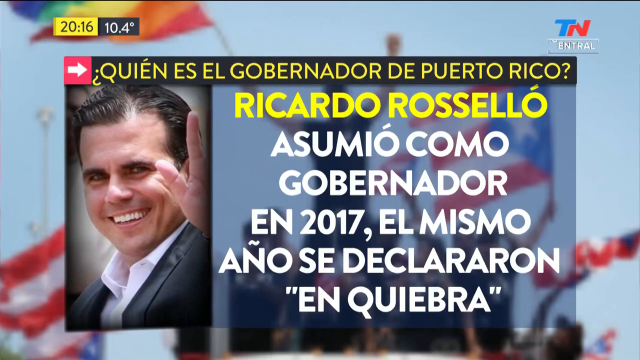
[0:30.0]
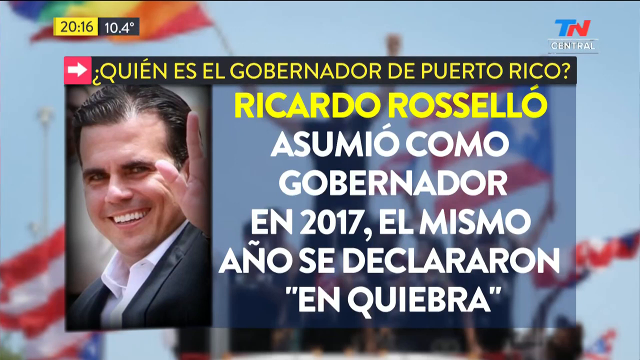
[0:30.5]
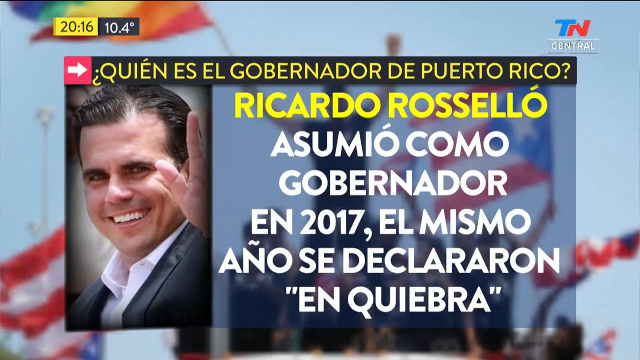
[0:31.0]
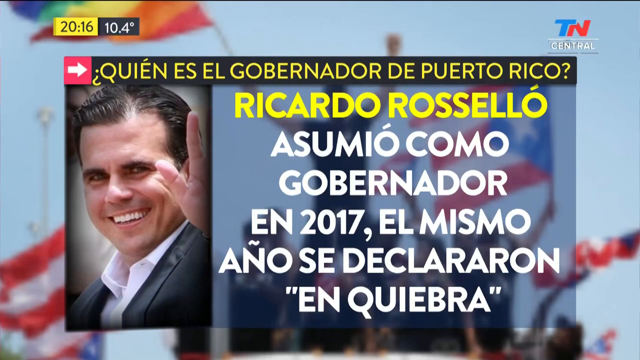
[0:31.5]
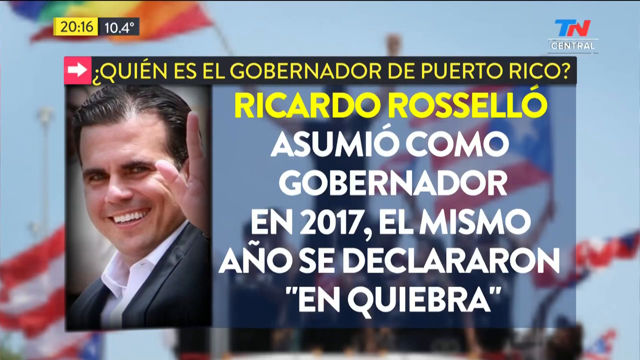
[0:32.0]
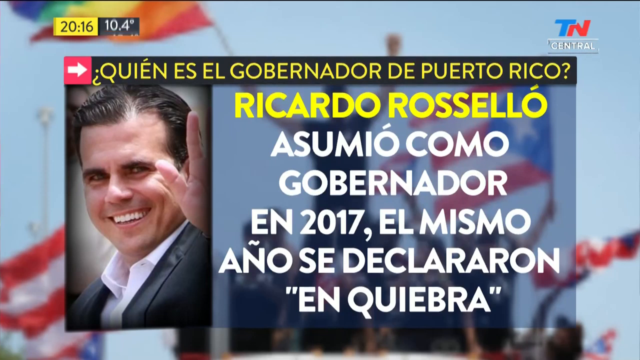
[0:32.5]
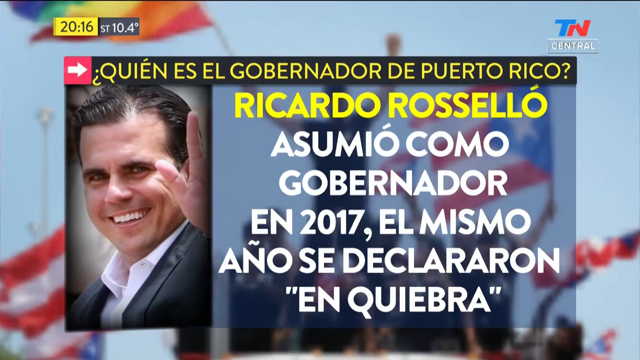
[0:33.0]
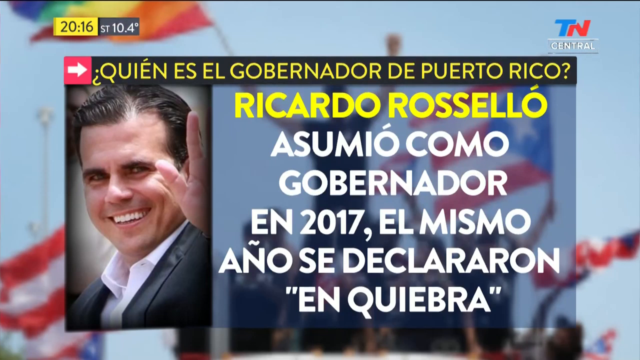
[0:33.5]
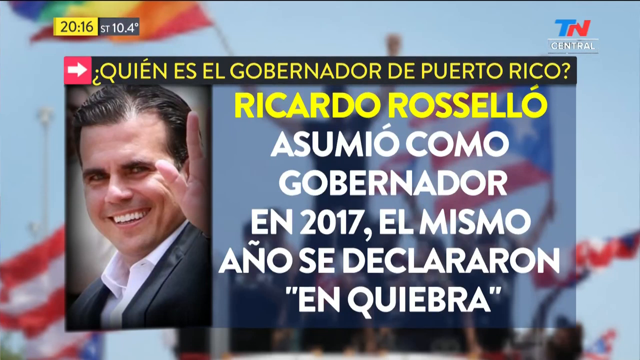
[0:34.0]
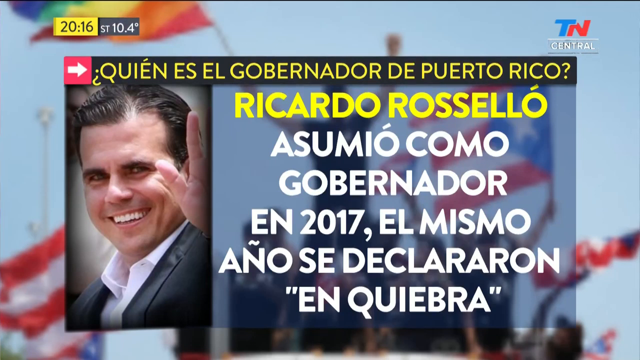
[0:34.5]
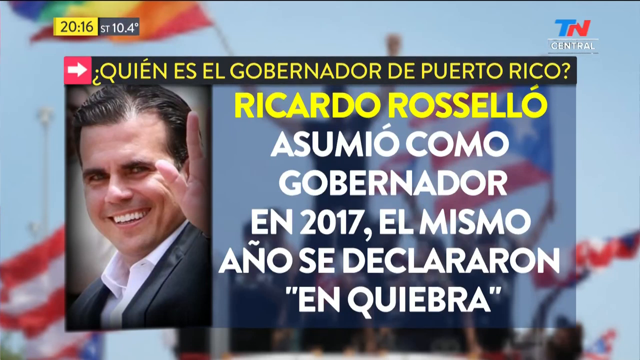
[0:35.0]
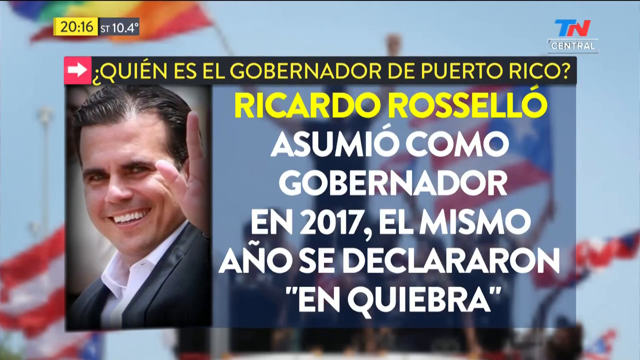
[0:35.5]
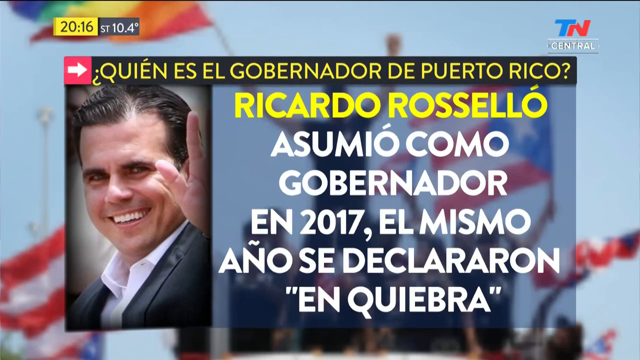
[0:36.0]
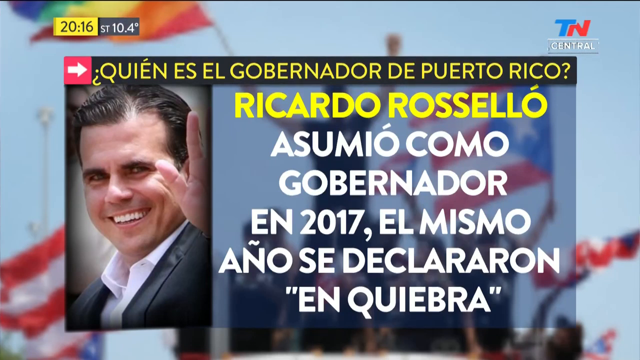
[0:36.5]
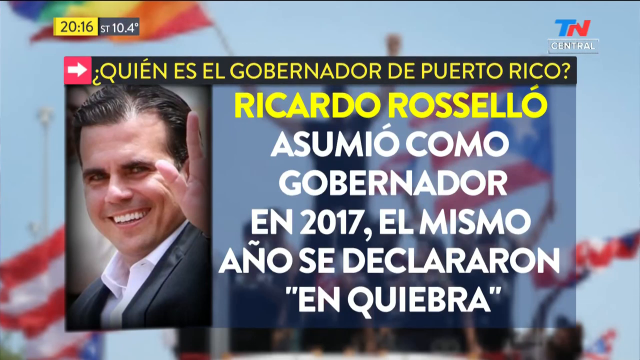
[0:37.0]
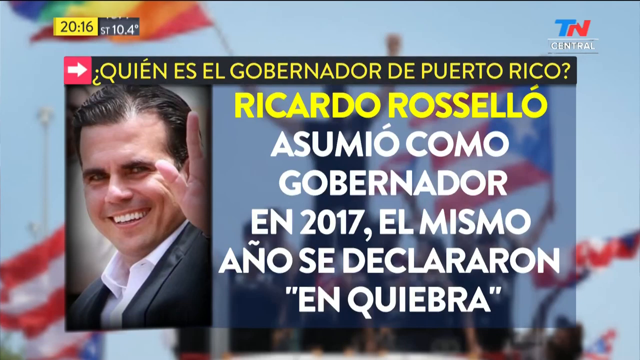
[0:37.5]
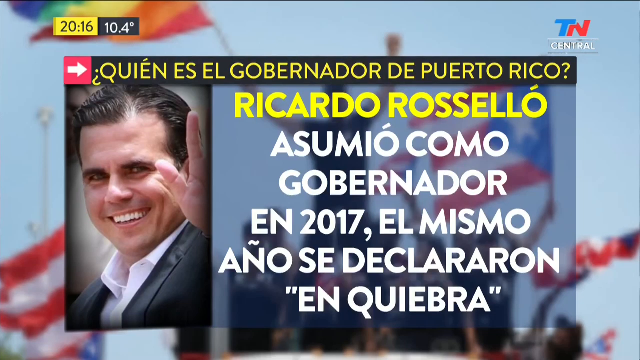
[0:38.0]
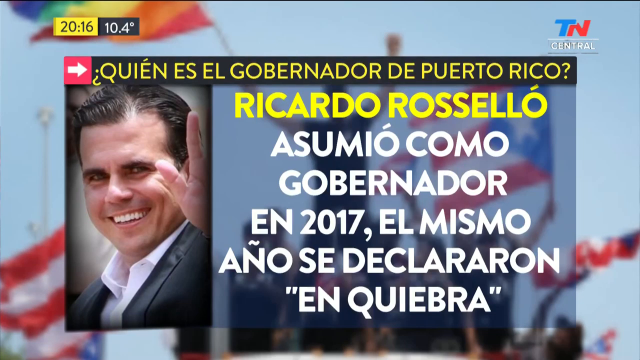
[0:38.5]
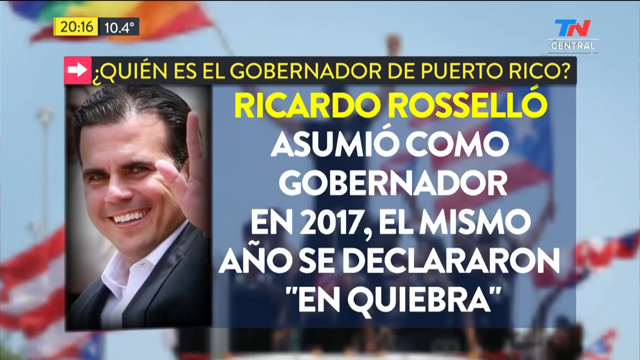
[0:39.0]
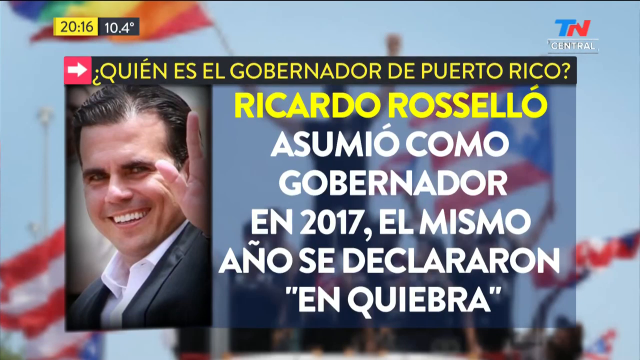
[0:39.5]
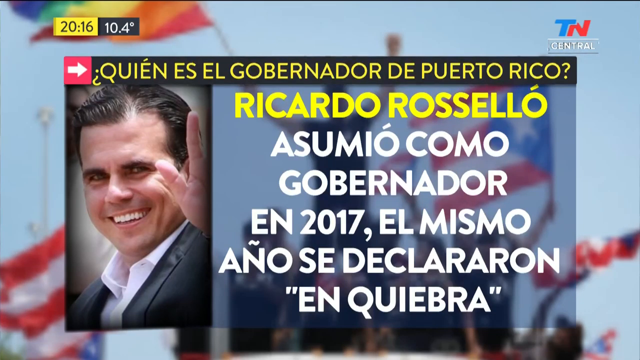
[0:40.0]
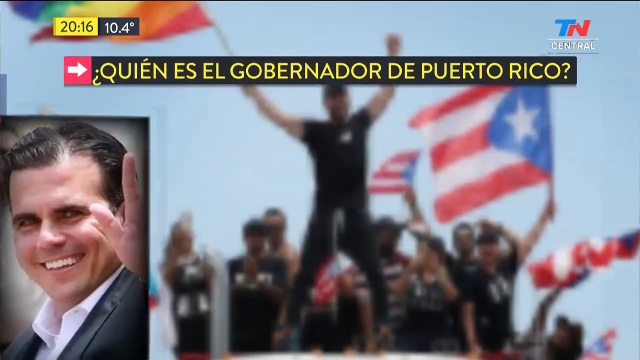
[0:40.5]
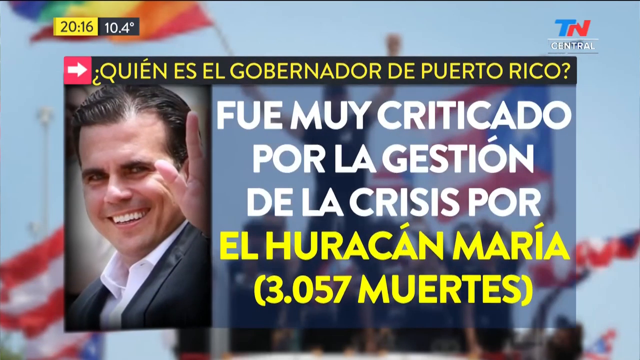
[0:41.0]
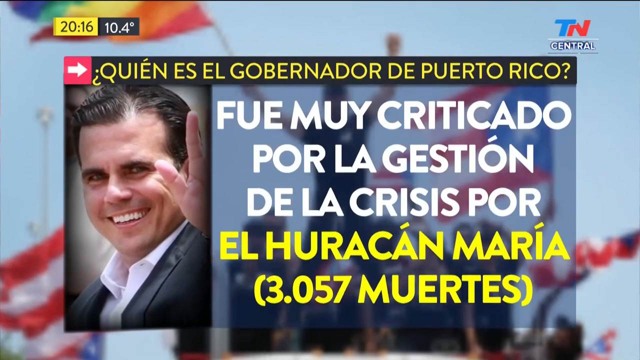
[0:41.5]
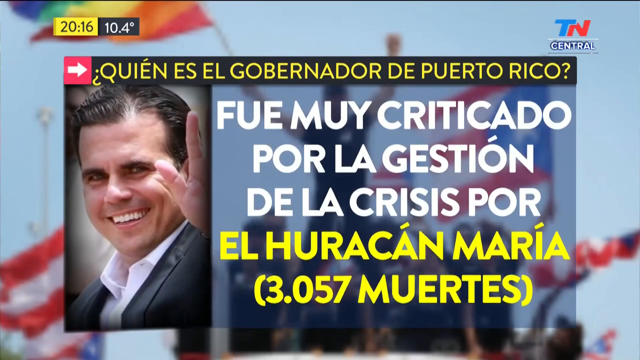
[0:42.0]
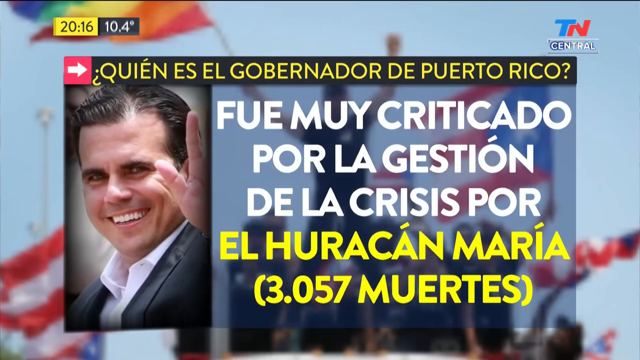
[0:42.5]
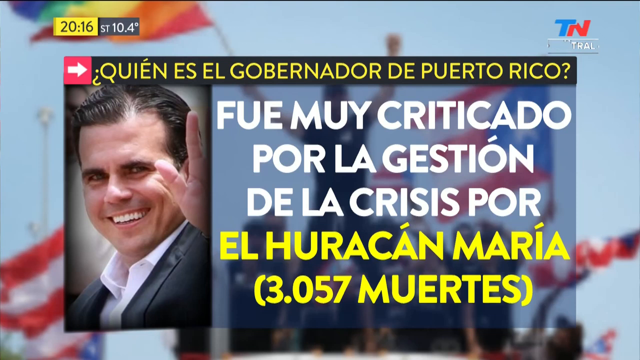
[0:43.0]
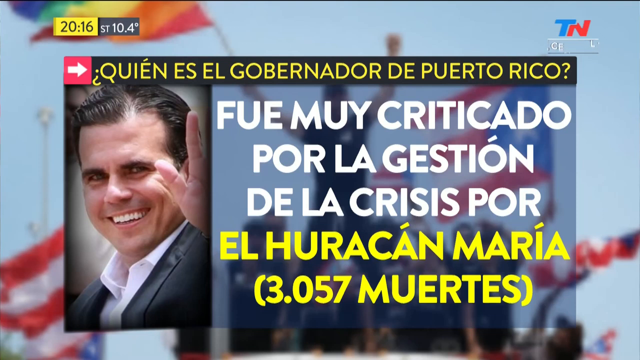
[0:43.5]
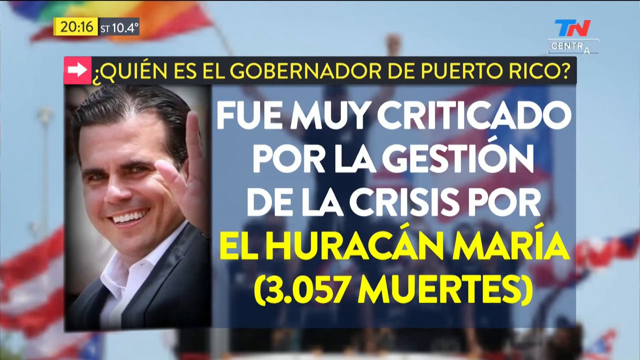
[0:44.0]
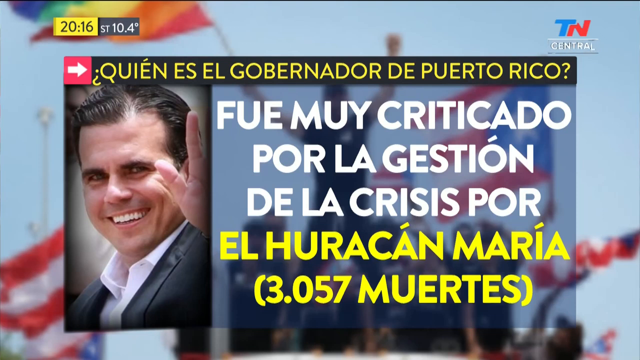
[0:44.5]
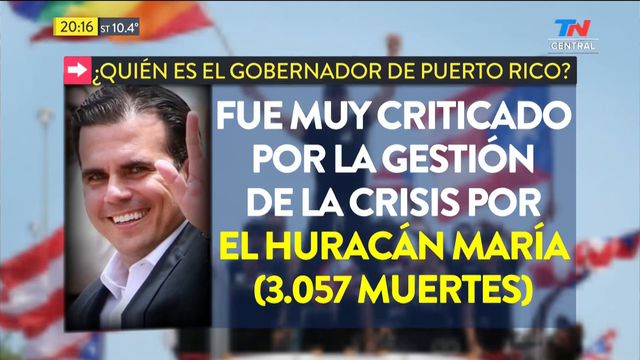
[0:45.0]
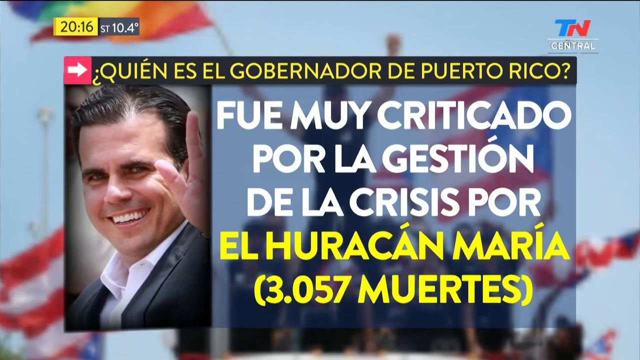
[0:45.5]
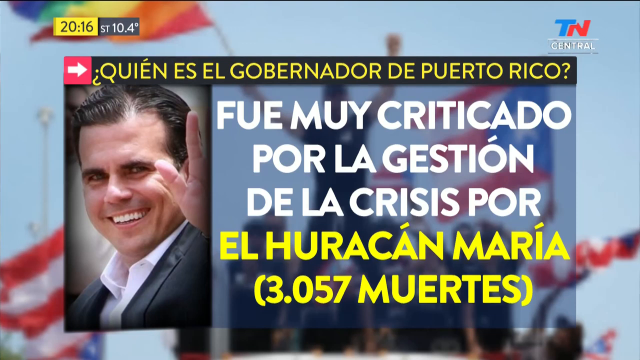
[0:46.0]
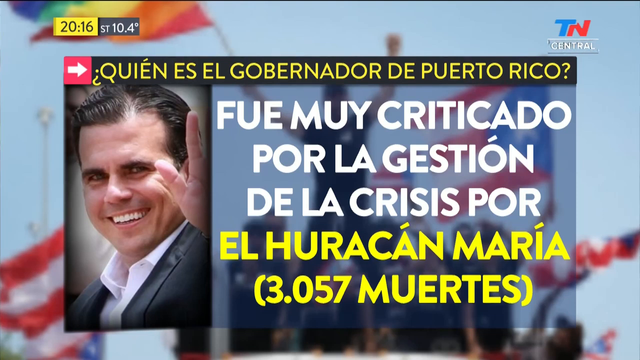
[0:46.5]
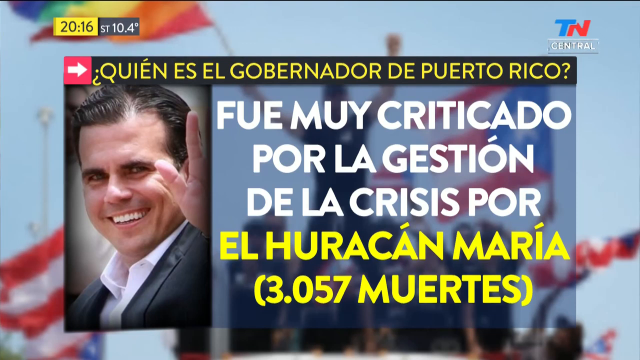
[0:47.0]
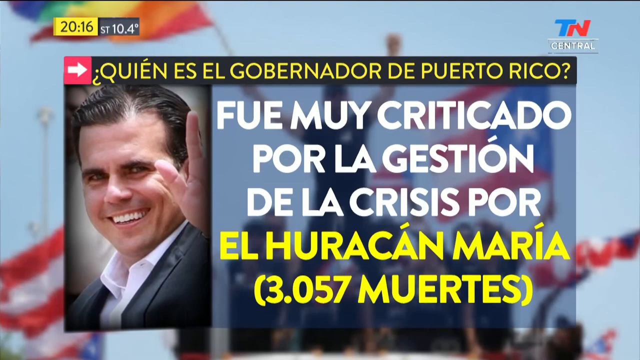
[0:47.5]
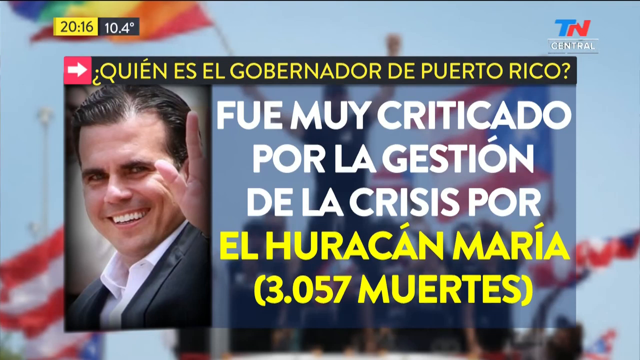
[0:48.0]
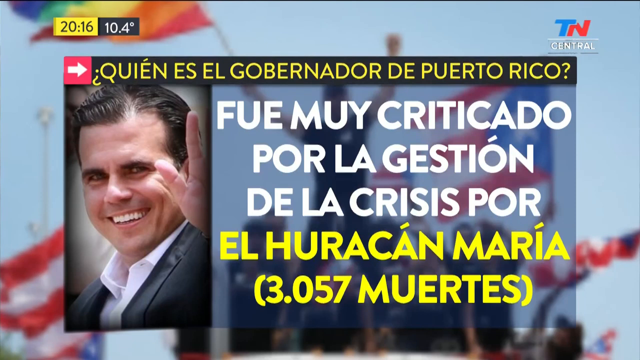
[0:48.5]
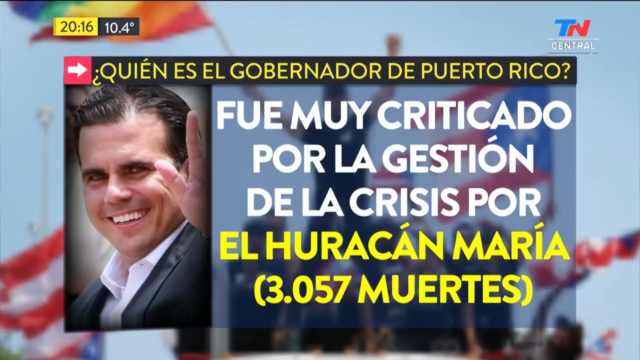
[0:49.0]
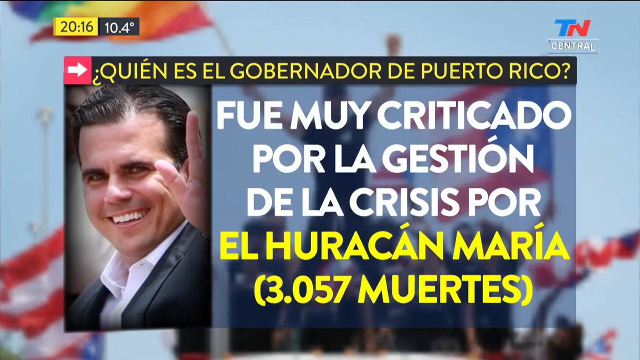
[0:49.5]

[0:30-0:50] A picture of Ricardo Rosselló is shown, with wording or quotes attached to it. The Puerto Rican flag is raised in the crowd, and people are moving freely. It appears to be a campaign situation, possibly related to an election, though it might also be a protest.